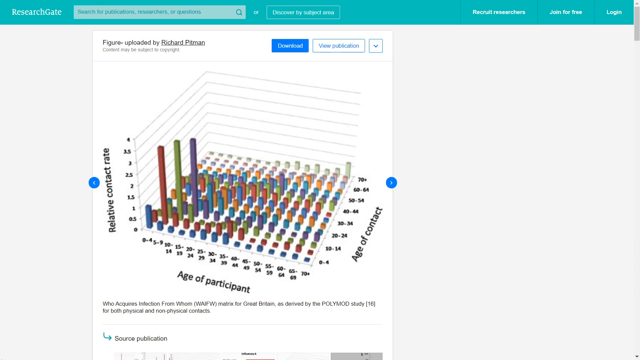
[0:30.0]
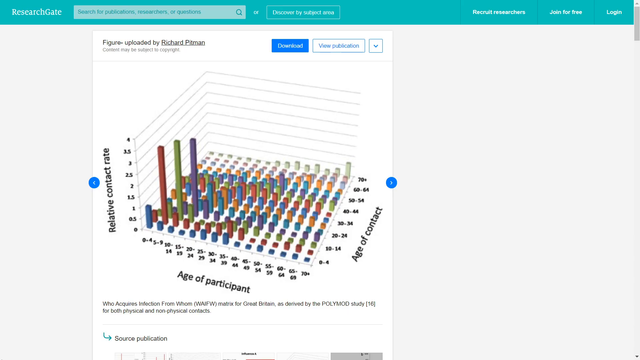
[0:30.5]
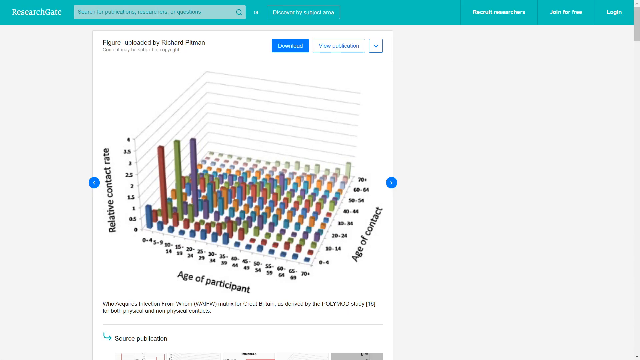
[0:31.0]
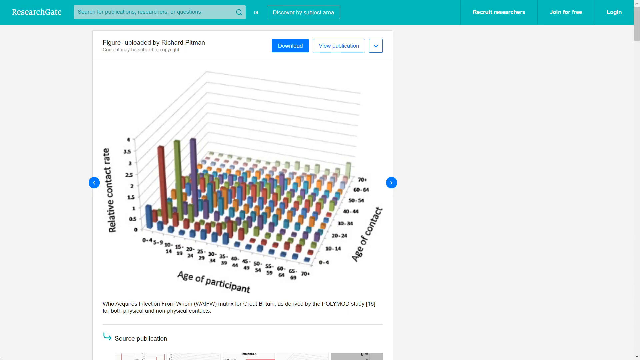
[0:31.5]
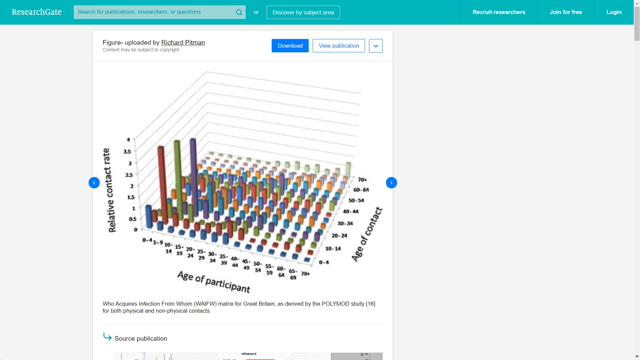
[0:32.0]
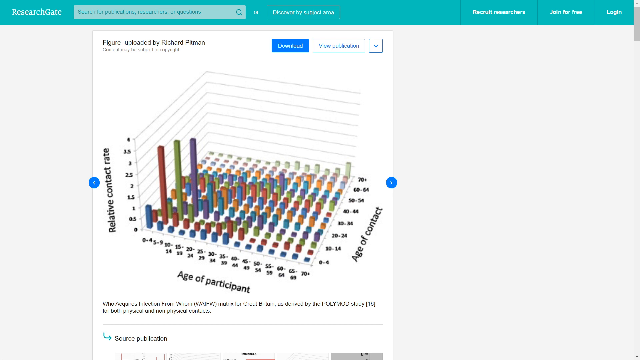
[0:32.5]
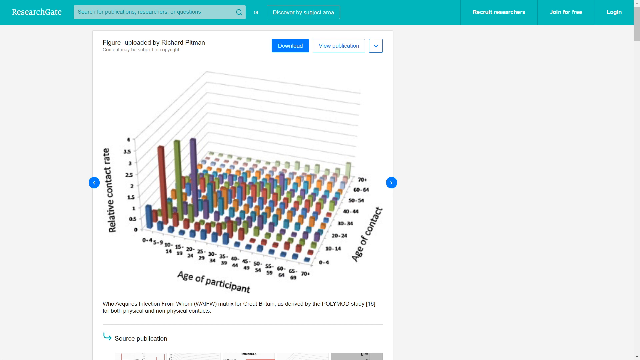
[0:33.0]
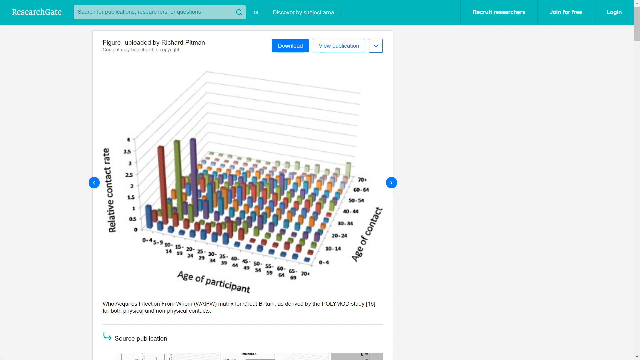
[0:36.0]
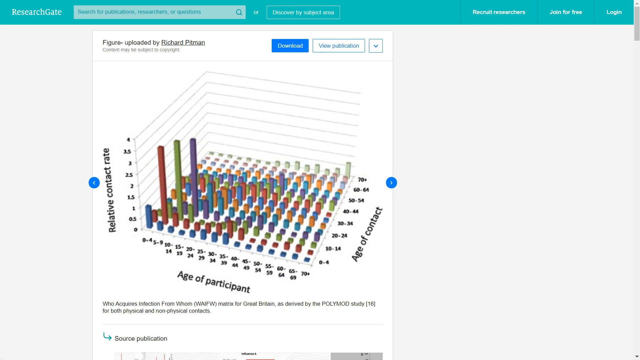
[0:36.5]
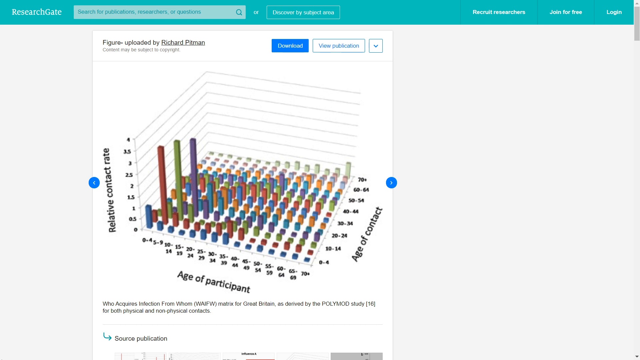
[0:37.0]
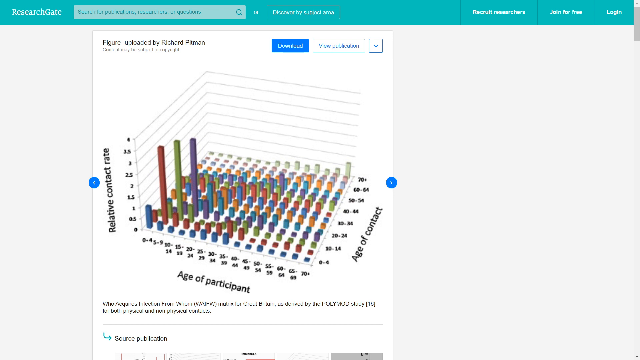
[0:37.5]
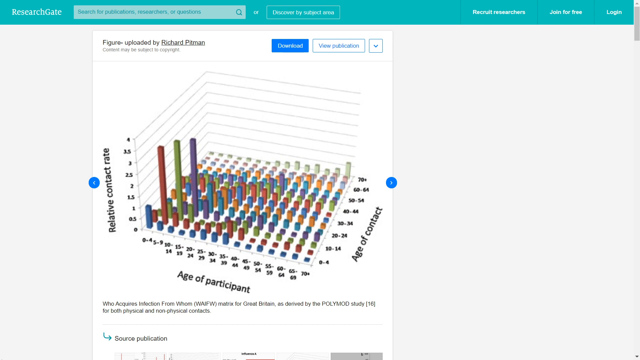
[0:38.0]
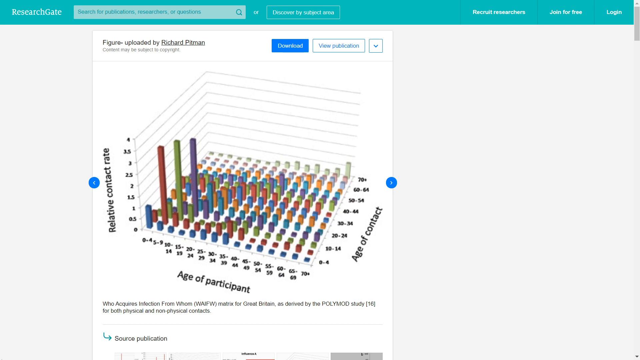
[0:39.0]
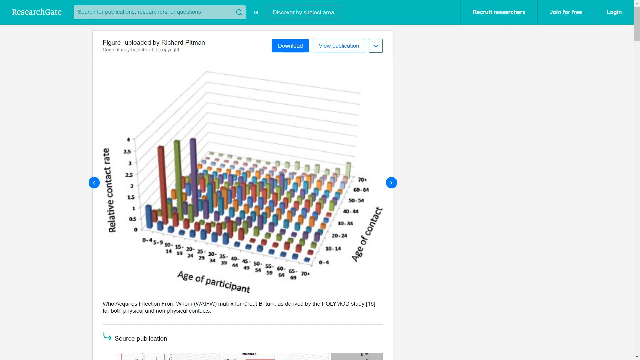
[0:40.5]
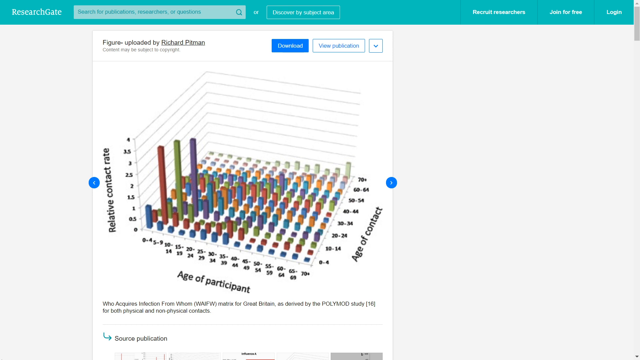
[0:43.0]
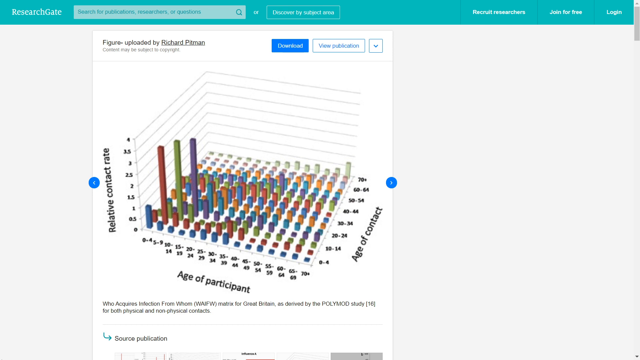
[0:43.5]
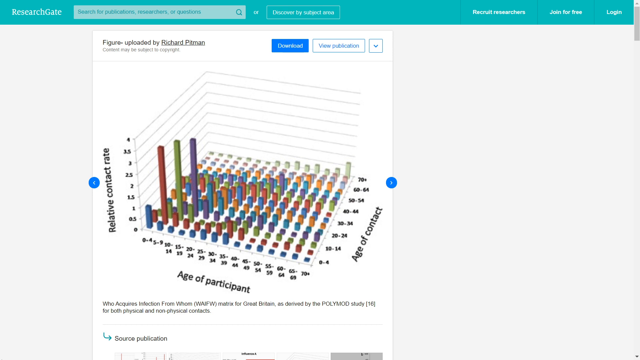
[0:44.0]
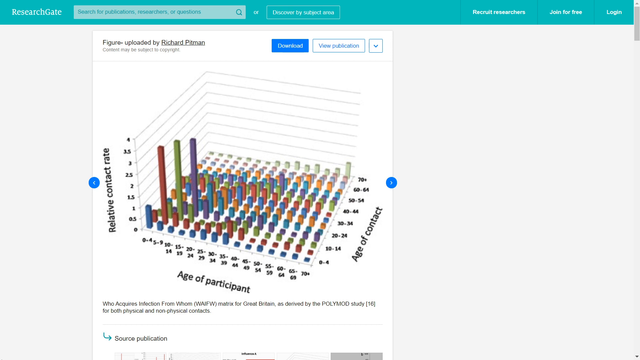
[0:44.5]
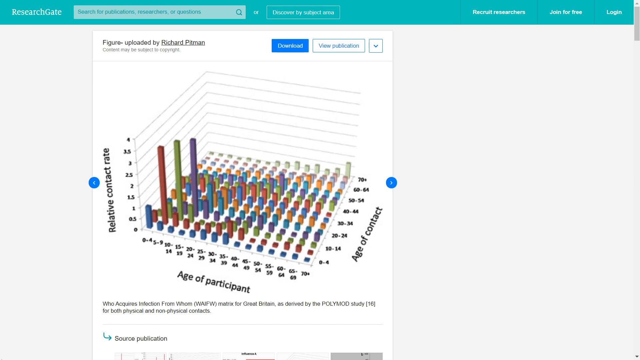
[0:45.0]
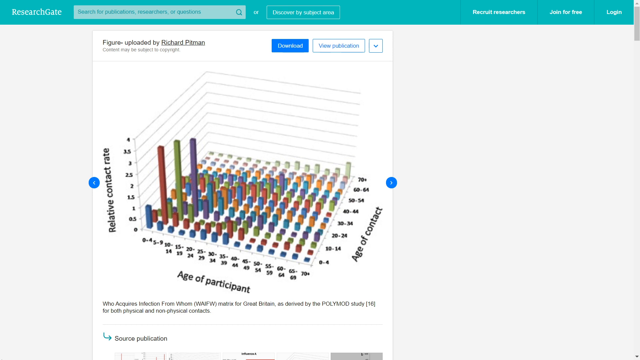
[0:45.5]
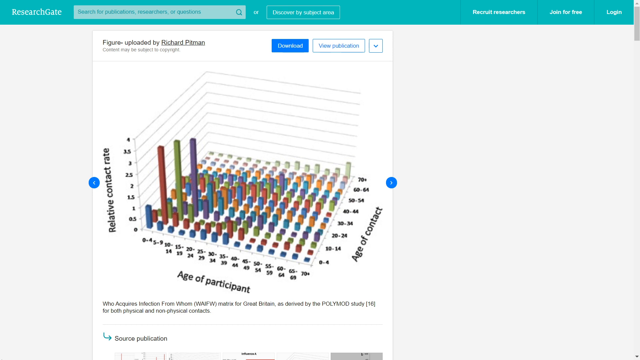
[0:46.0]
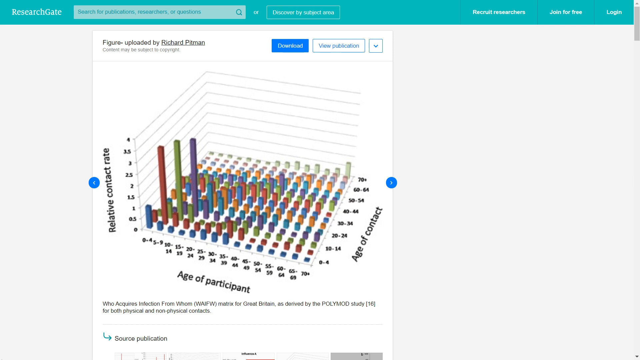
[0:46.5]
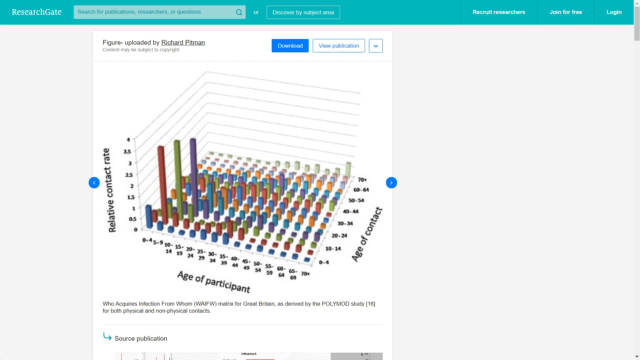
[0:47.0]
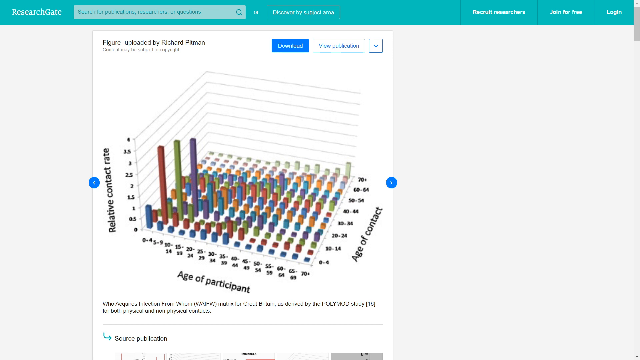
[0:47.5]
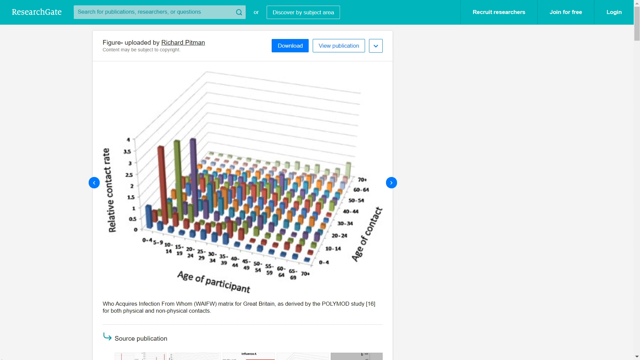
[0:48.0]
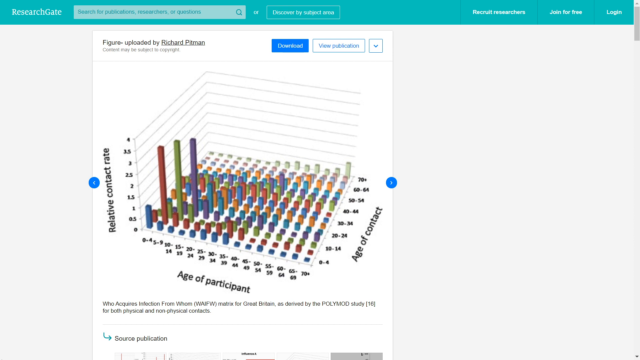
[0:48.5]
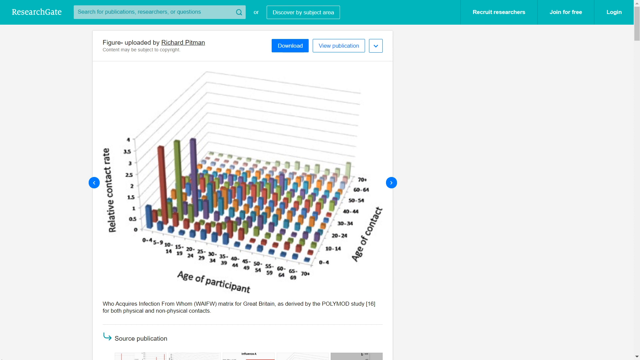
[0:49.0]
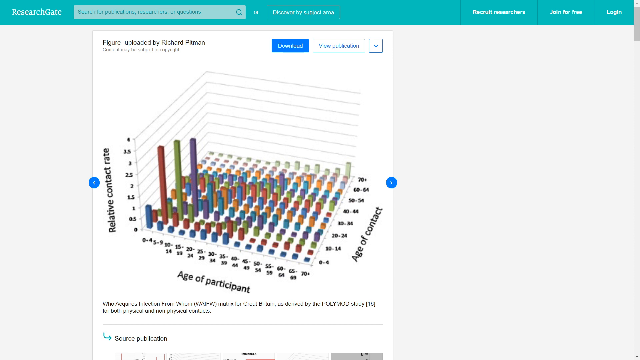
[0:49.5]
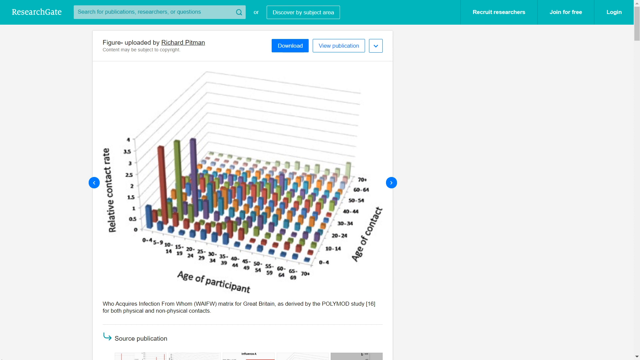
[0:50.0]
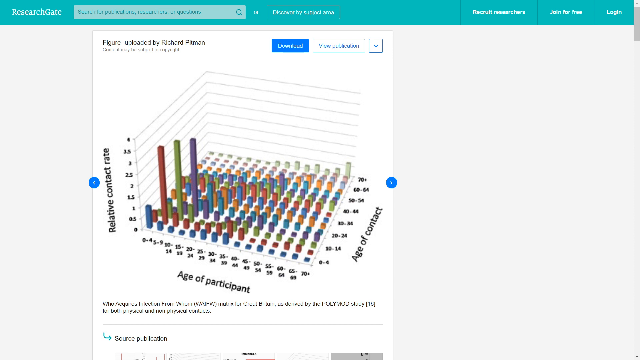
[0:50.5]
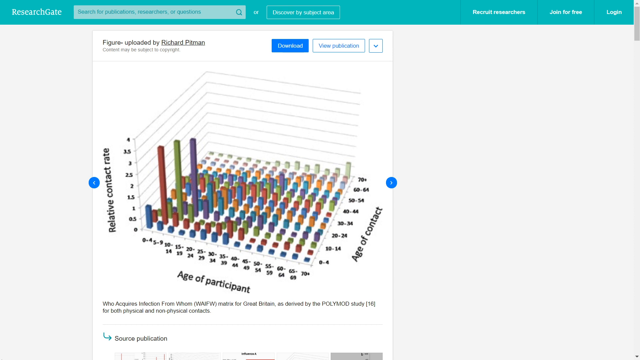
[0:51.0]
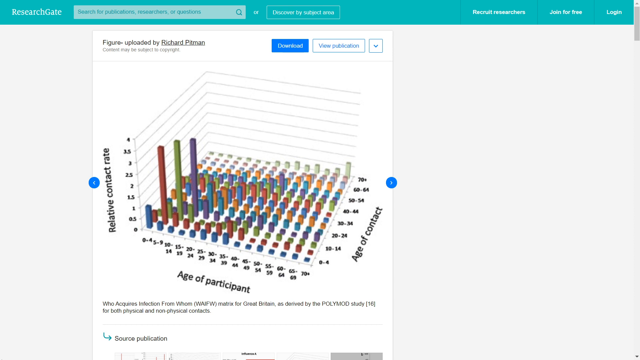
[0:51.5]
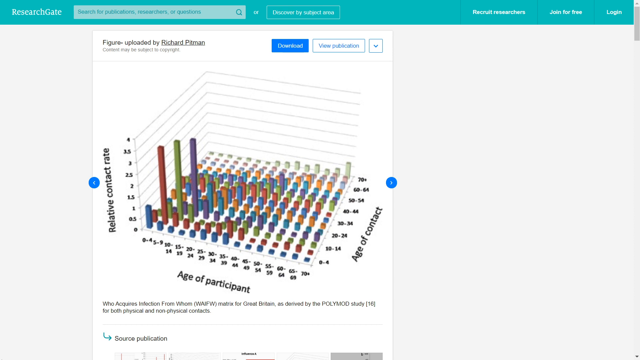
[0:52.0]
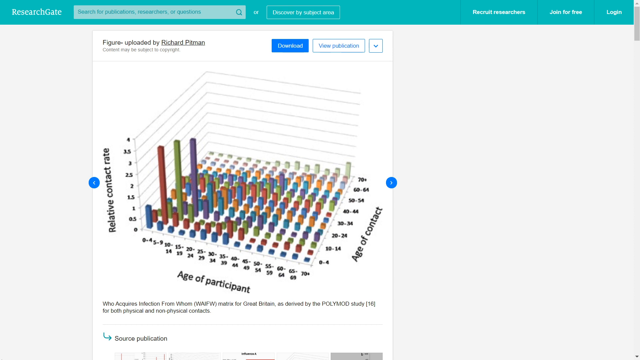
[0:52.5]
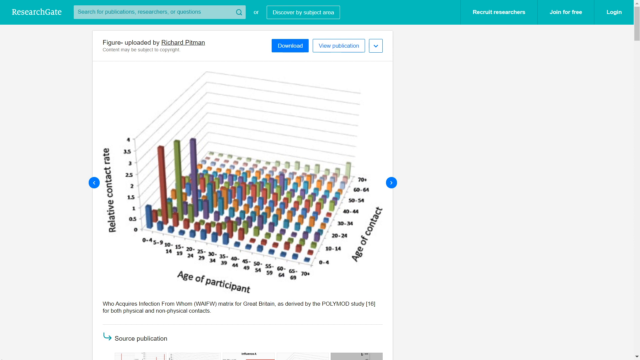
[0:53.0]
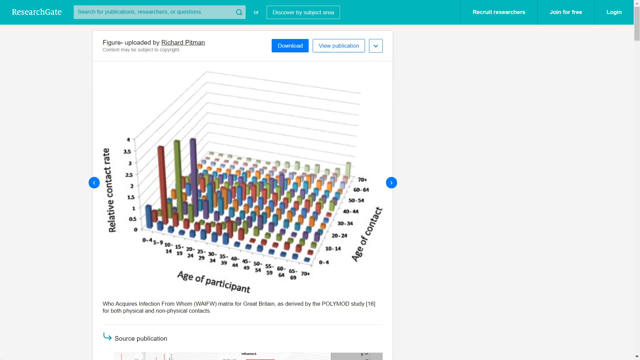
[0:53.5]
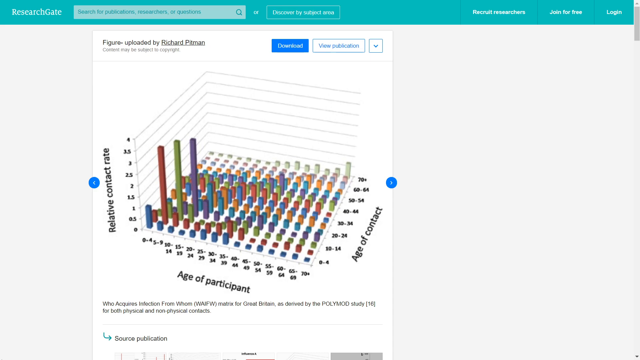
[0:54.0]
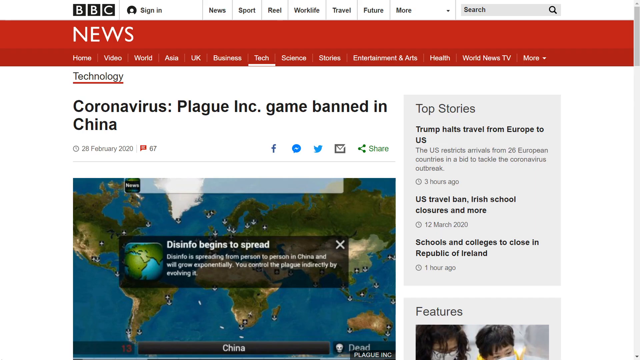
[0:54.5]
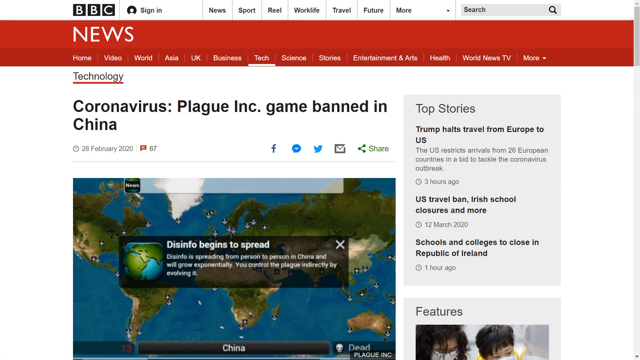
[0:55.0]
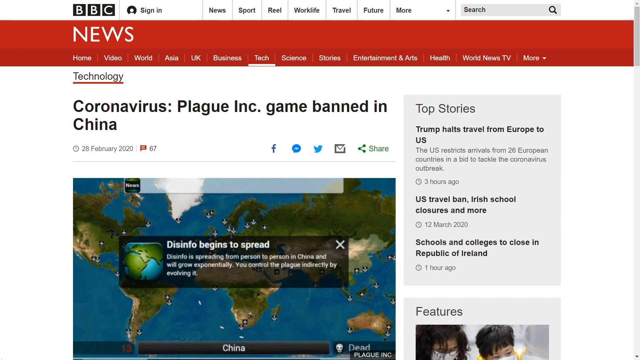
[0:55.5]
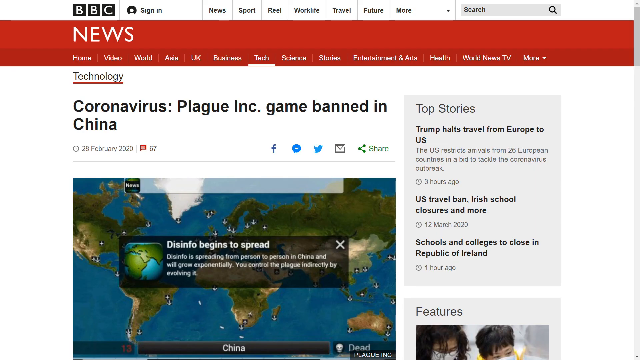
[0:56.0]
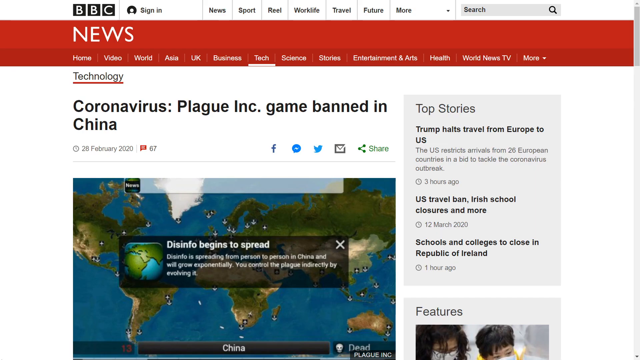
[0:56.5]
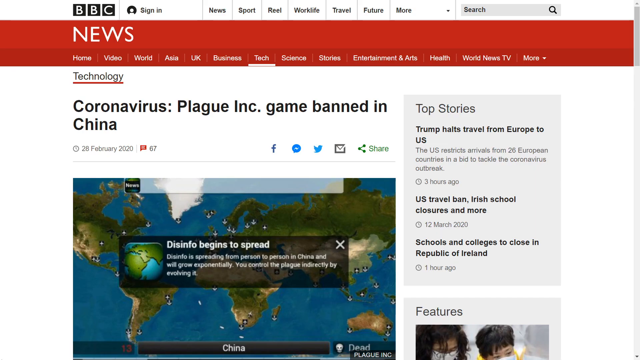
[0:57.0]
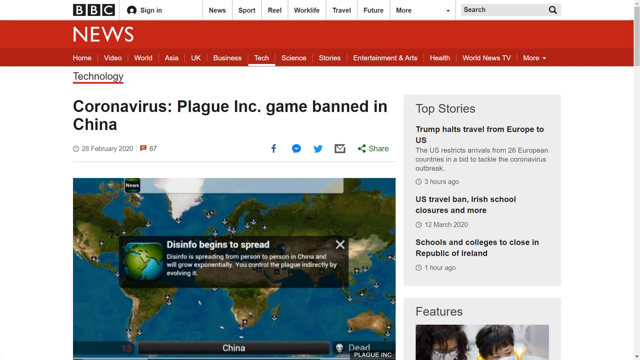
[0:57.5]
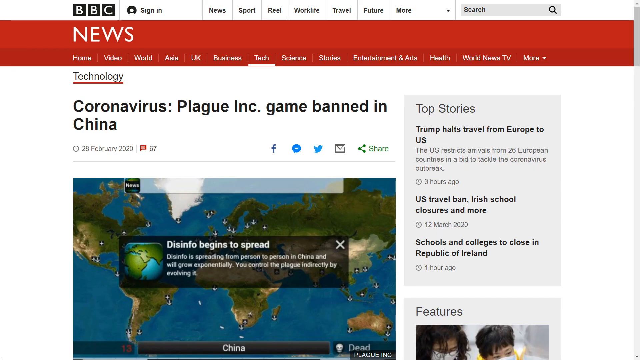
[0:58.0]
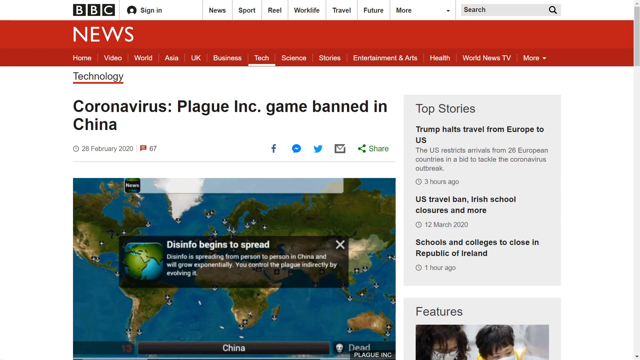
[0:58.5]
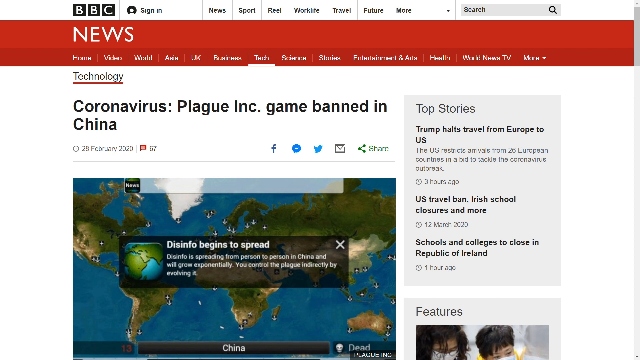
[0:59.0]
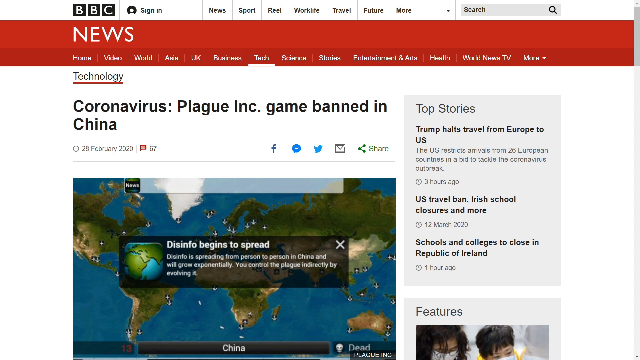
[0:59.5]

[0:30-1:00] A page shows a figure uploaded by Richard Piman, with options to download and view the publication. The chart, a scatter chart or bar graph, shows relative conduct rate against age of participants and age of conduct. The age of conduct axis has groups 0 to 4, 10 to 14, 20 to 24, 30 to 34, 40 to 44, 50 to 54, 60 to 64, and 70 plus. The relative conduct rate axis runs from 0 to 4 in steps of 0.5. The age of participant axis ranges from 0 to 70 plus. The bars are of different heights and colors, generally spread out, high at the beginning and low at the end. The next scene shows BBC news with the headline "coronavirus plague game banned in China" and top stories including "Trump halts travel from Europe to US" and "US travel ban, Irish school closure and more", about schools and colleges closing in the Republic of Ireland.